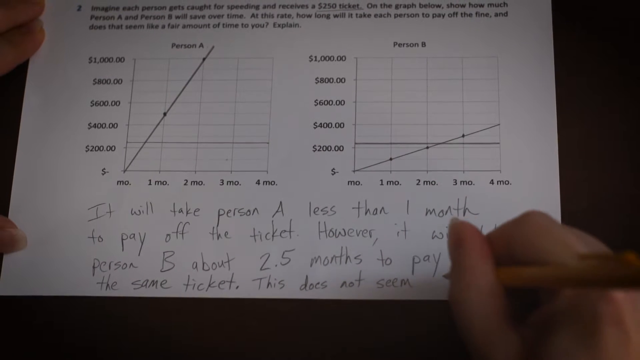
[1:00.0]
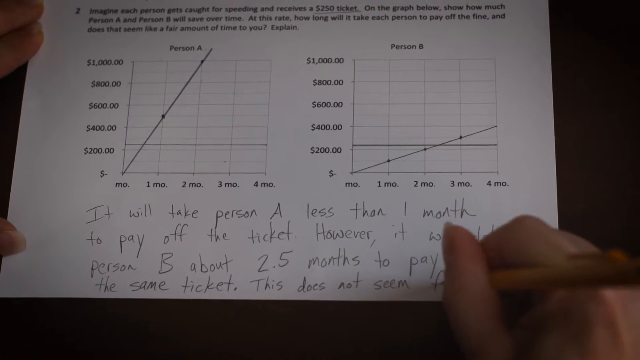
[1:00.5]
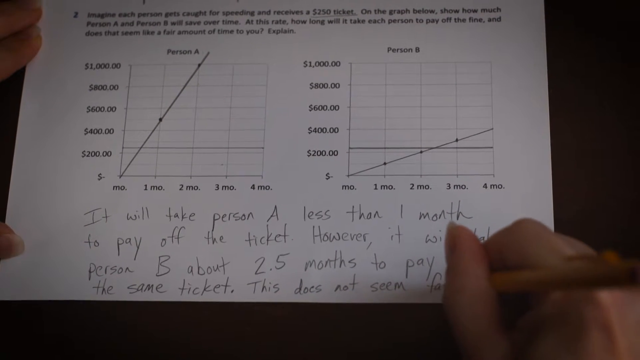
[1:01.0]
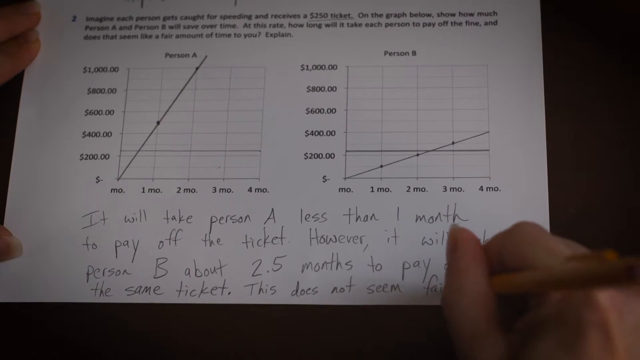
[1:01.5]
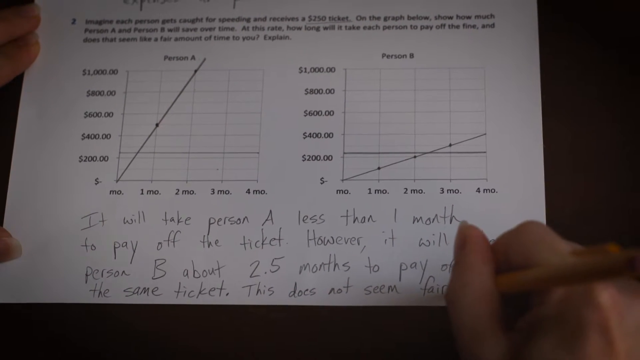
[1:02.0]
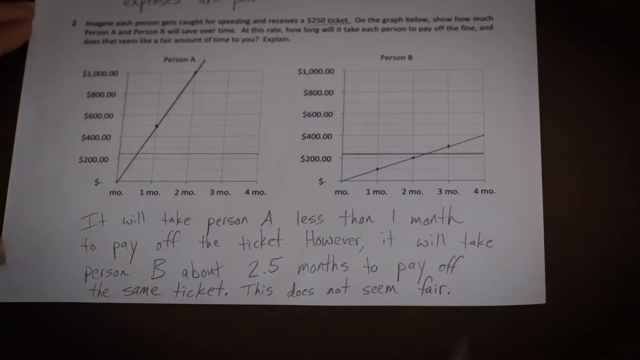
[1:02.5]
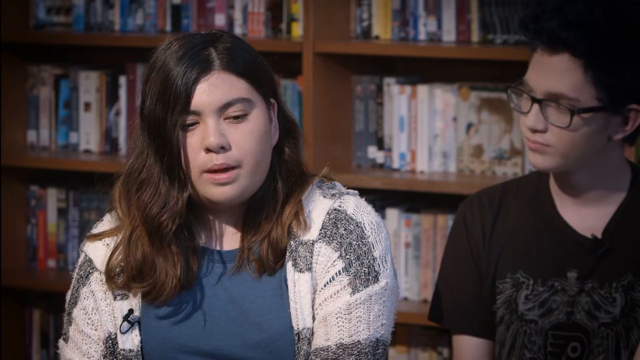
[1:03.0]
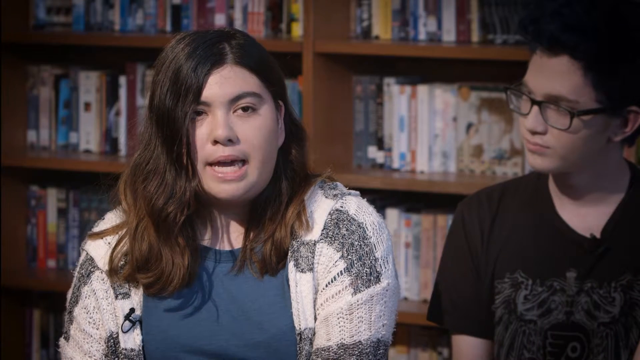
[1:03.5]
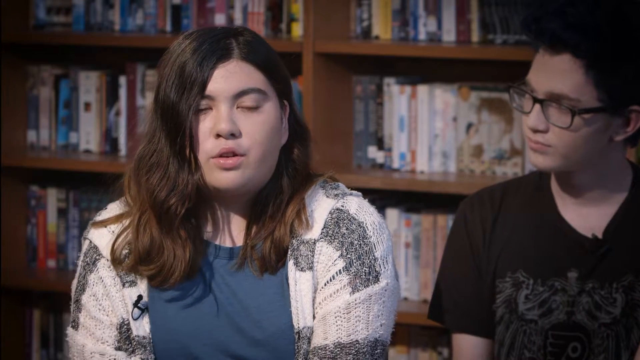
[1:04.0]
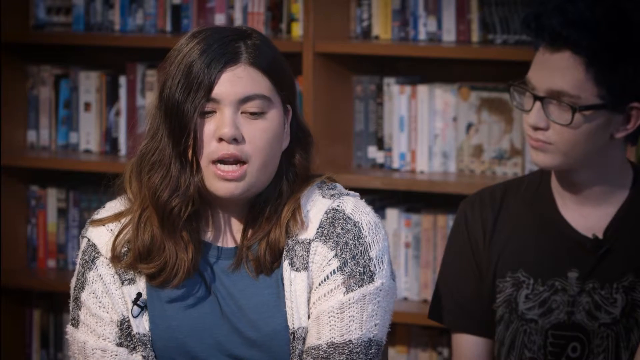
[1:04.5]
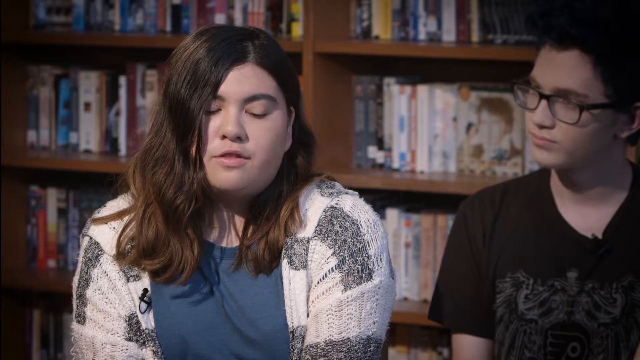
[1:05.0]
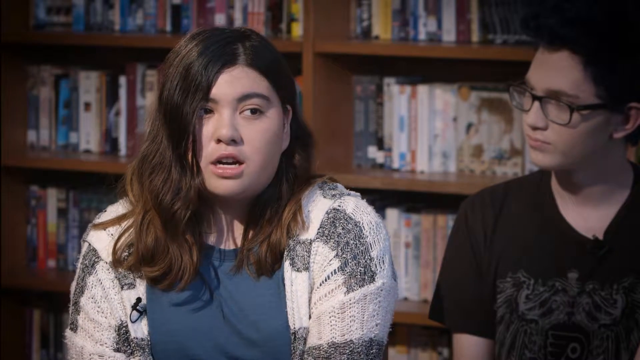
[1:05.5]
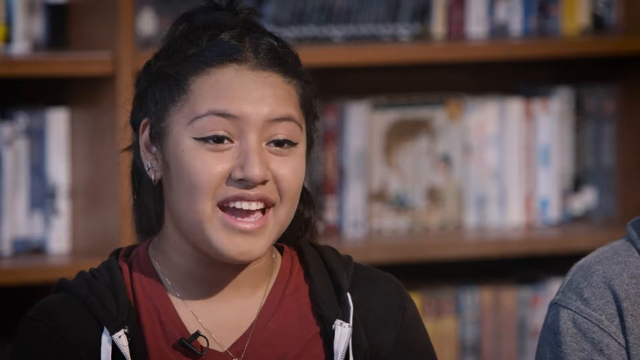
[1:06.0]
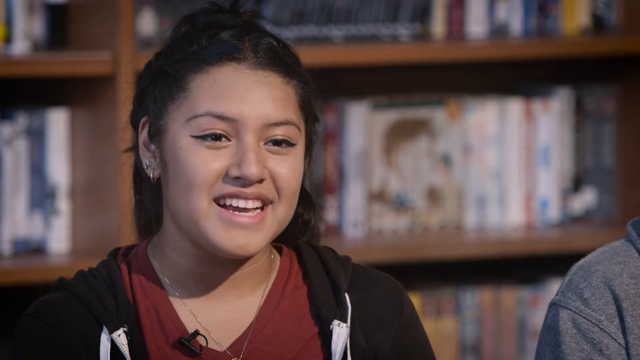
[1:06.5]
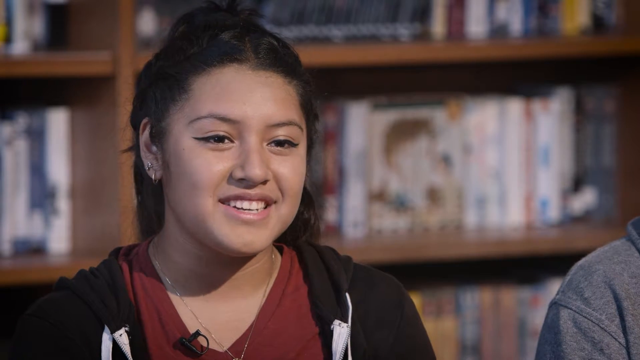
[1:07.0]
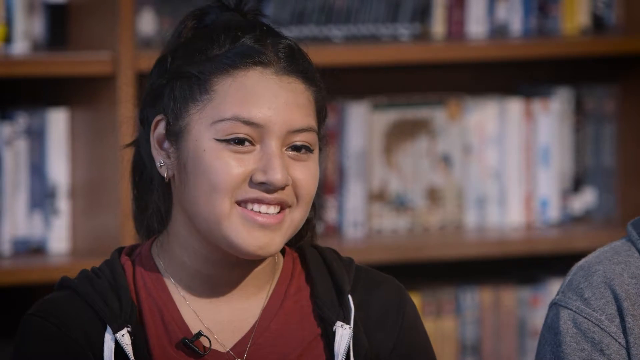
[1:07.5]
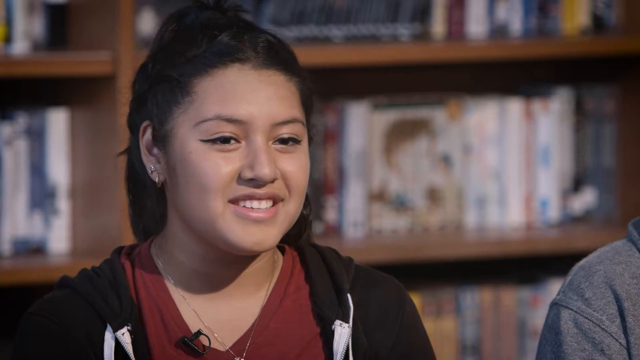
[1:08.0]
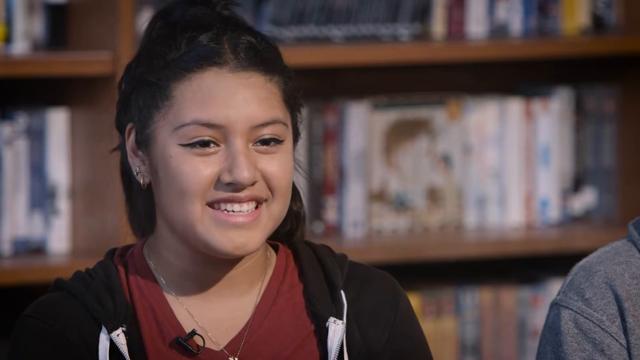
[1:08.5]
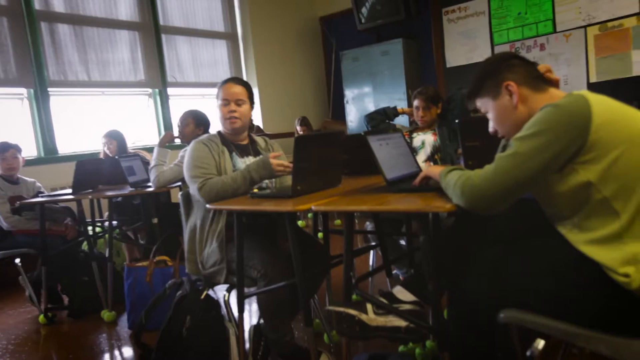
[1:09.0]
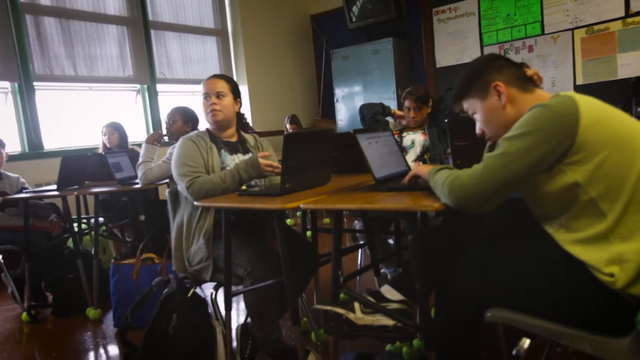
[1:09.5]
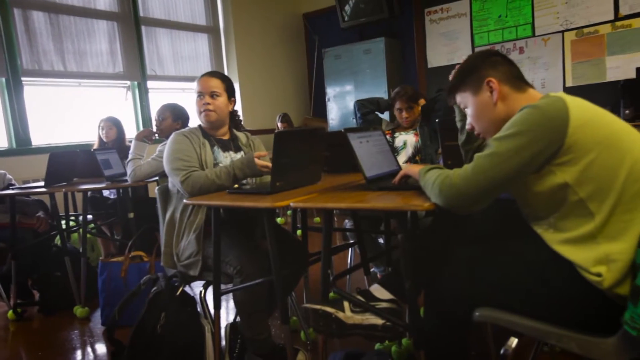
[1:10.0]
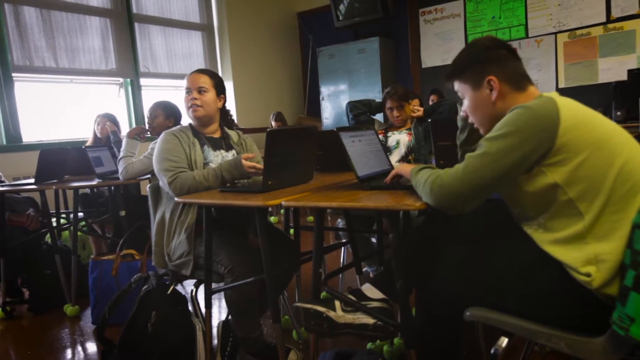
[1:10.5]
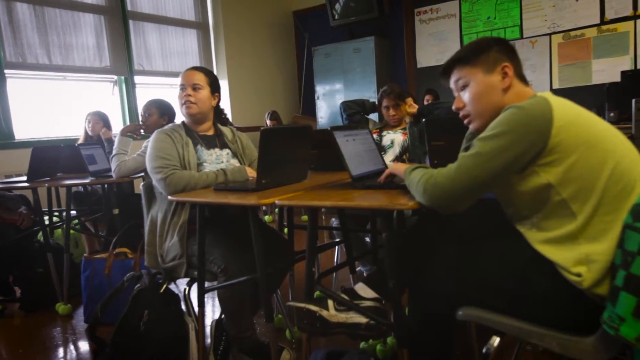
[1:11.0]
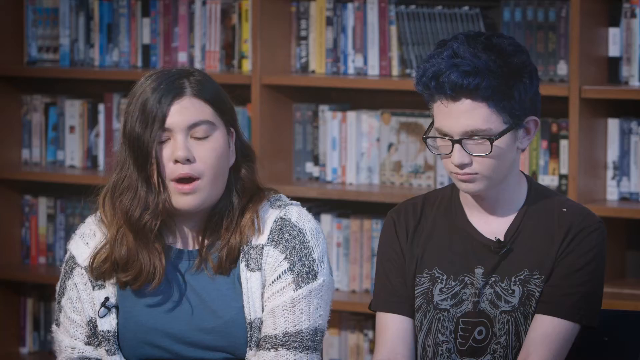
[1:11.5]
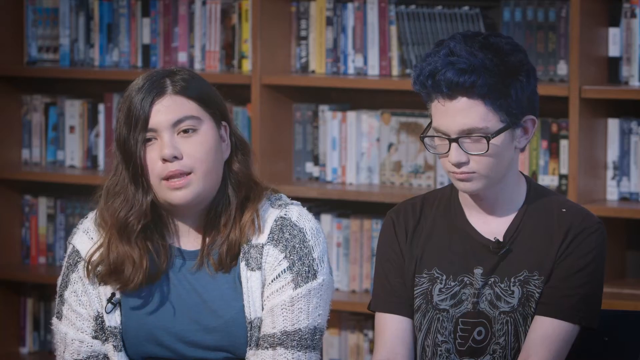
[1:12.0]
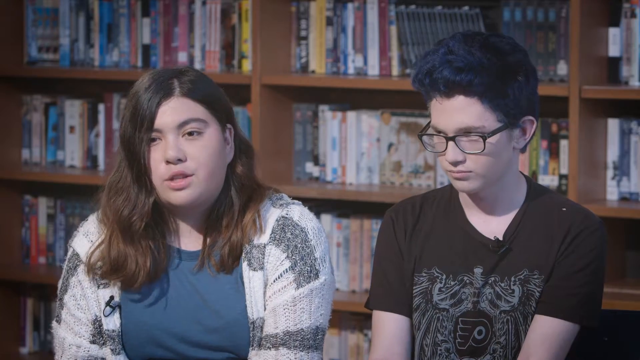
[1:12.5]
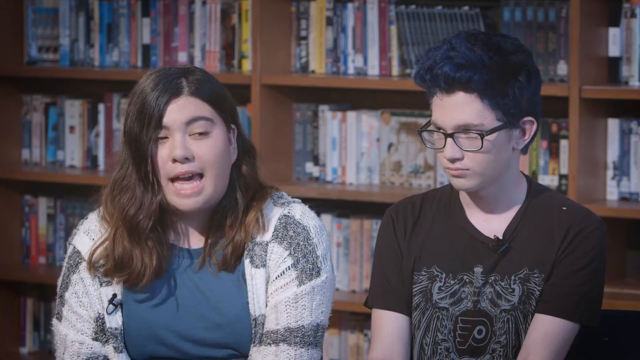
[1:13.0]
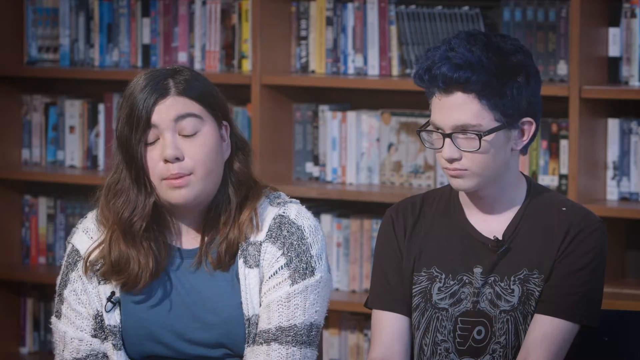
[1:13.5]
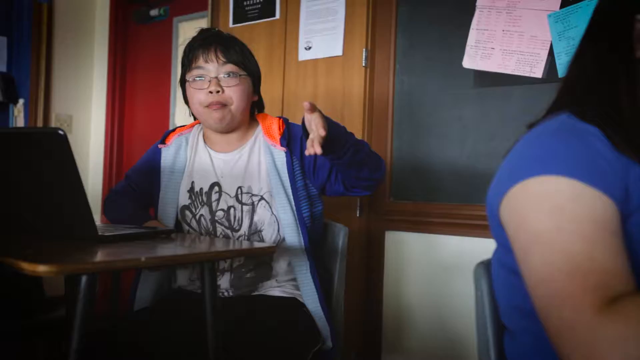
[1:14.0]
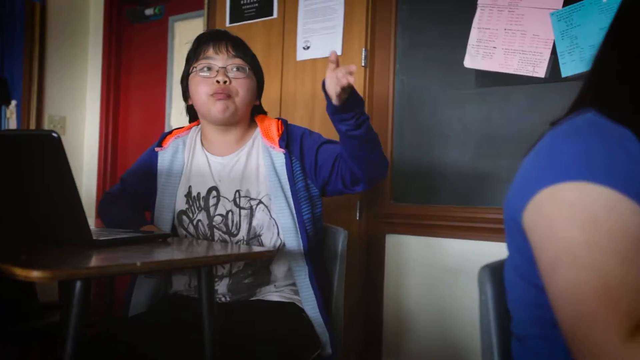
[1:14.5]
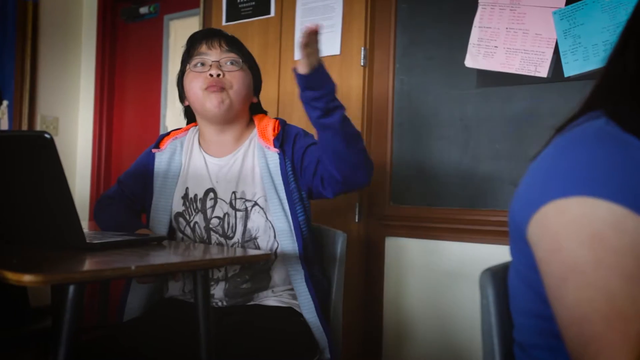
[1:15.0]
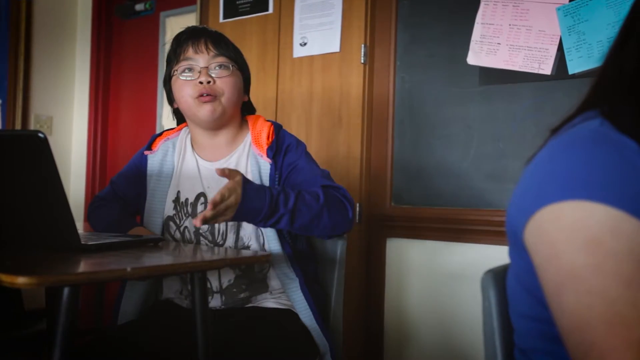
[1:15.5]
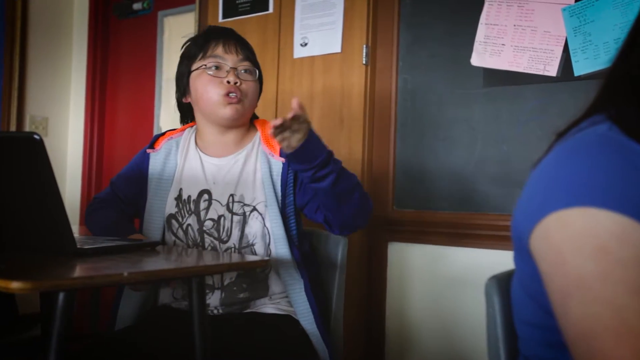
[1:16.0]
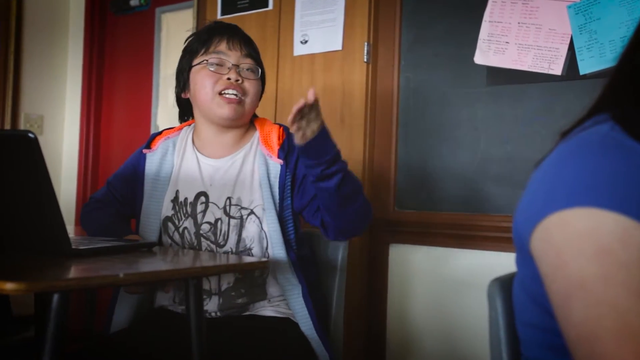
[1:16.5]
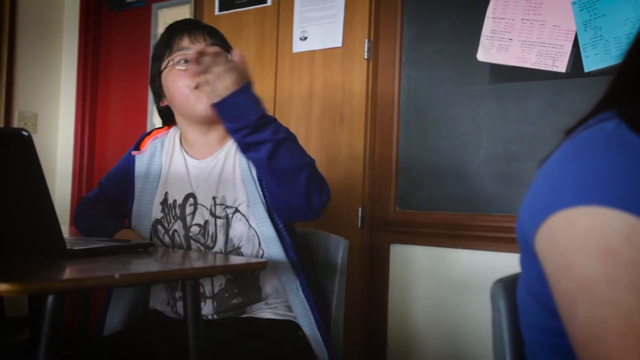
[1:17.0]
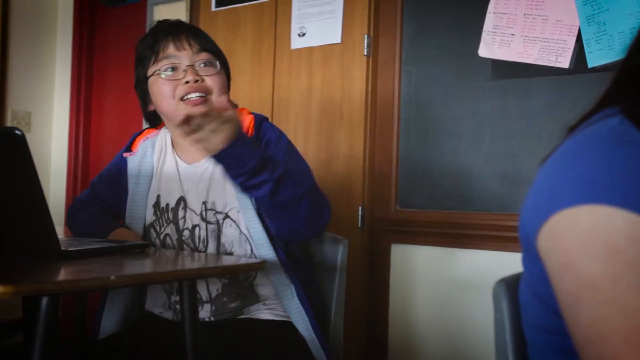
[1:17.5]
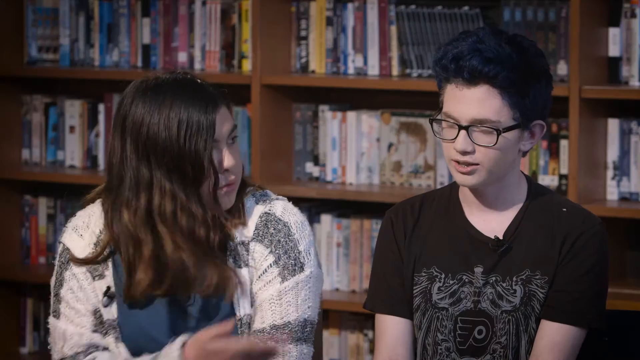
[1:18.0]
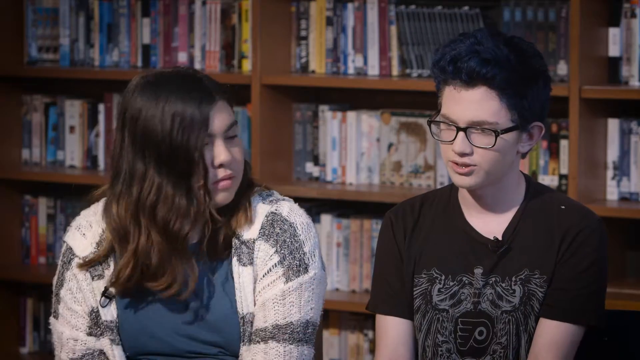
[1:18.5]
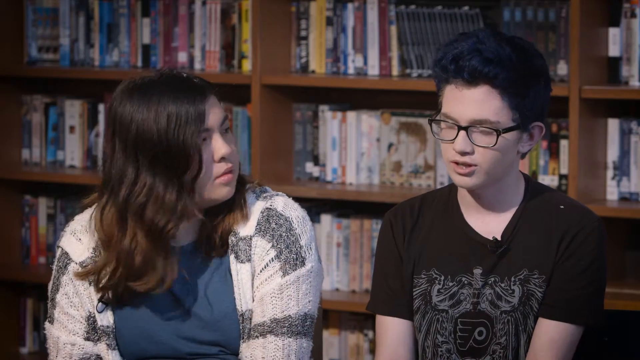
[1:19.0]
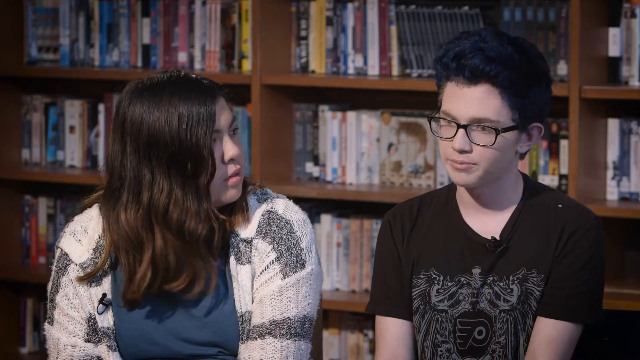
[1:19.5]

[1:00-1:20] A person writes on a worksheet. The video goes back to the young teenagers being interviewed in the library, showing a young girl talking during the interview. It pans to another teenager who is also being interviewed; this teenager has piercings and a ponytail and wears a necklace. The scene then moves to another classroom, where lots of students have their own laptops and their backpacks next to them. It returns to the interview with the teenager with black dyed hair and the girl with long hair and a blue t-shirt, resuming with the young girl. Afterwards the video returns to the classroom, where a young Asian teenager talks to what seems to be the teacher; the boy is very expressive.